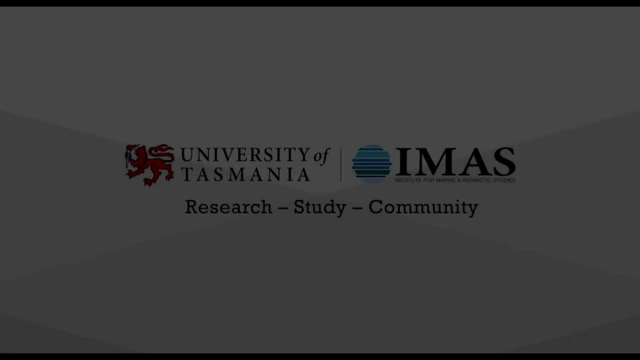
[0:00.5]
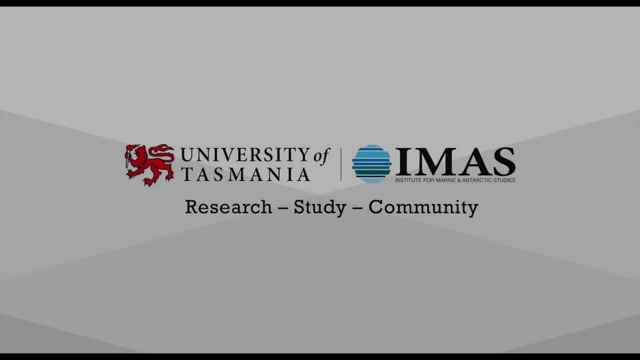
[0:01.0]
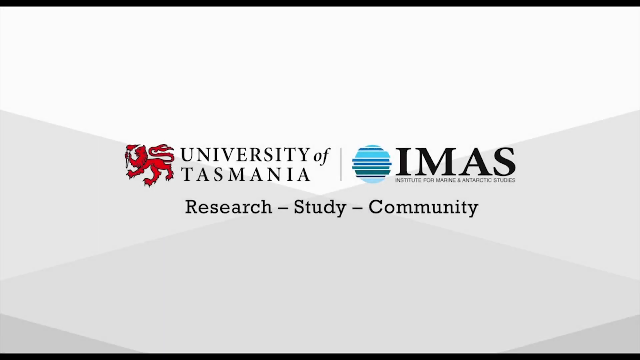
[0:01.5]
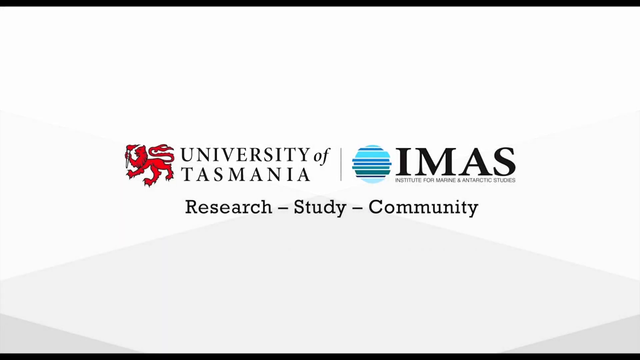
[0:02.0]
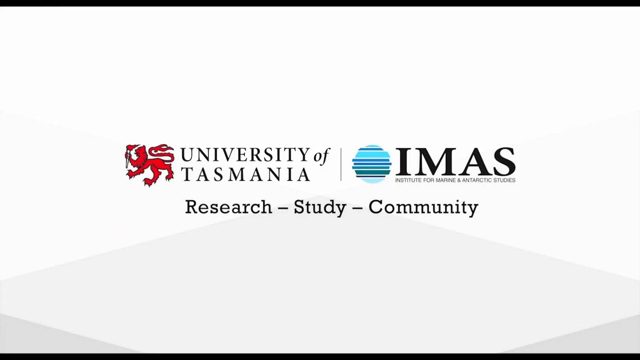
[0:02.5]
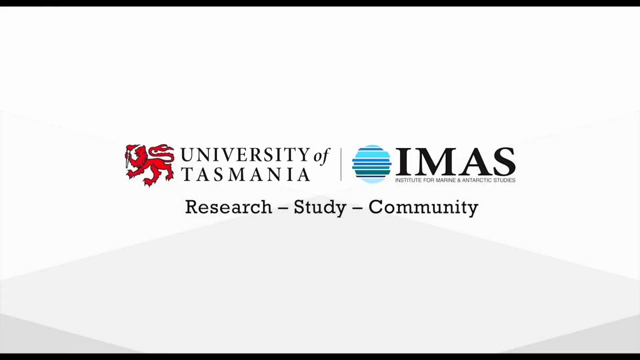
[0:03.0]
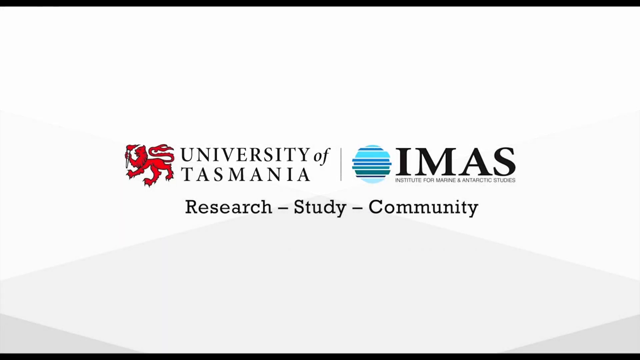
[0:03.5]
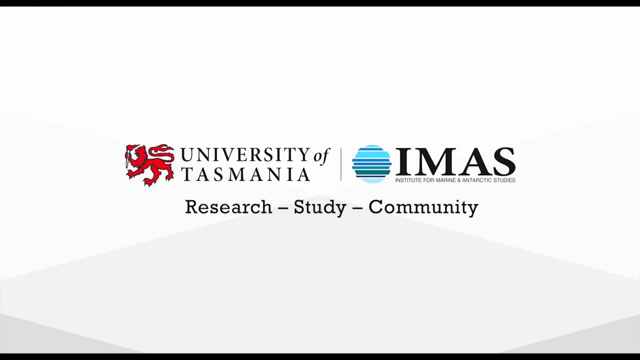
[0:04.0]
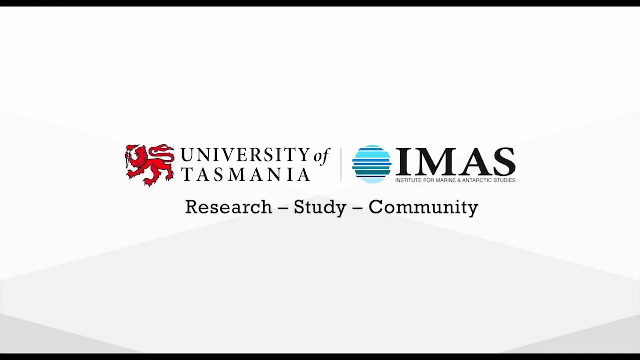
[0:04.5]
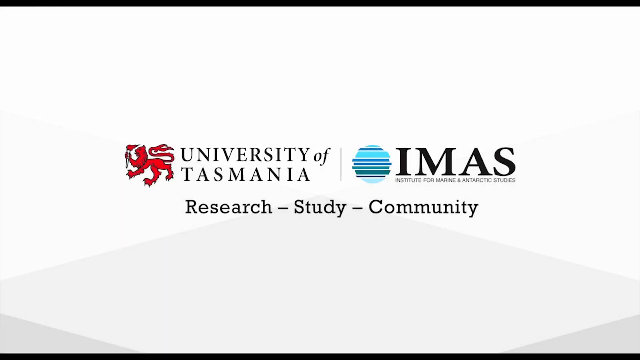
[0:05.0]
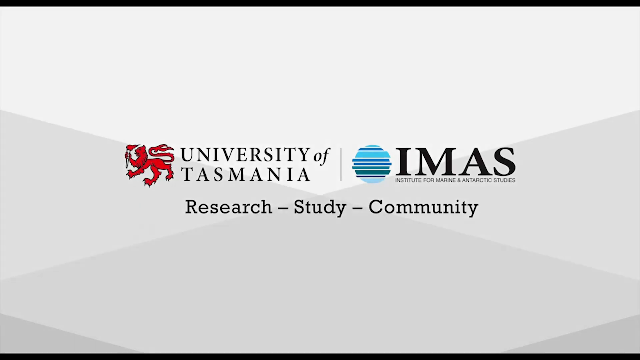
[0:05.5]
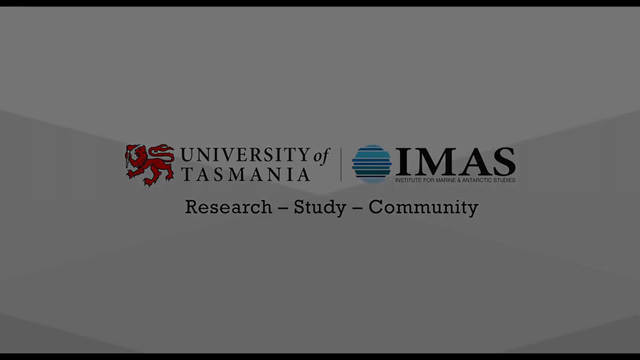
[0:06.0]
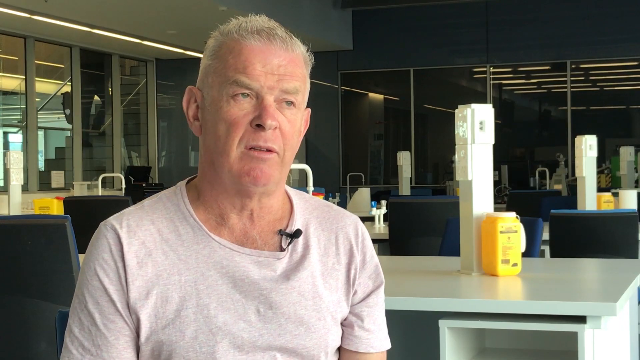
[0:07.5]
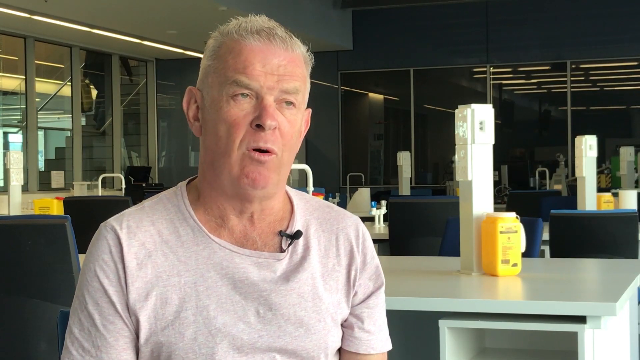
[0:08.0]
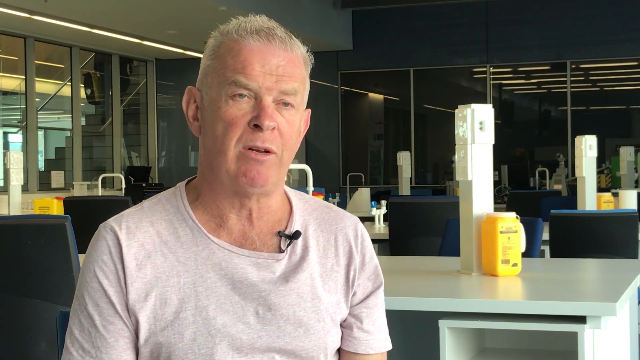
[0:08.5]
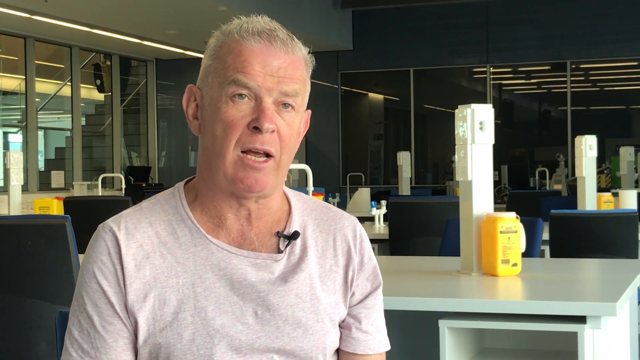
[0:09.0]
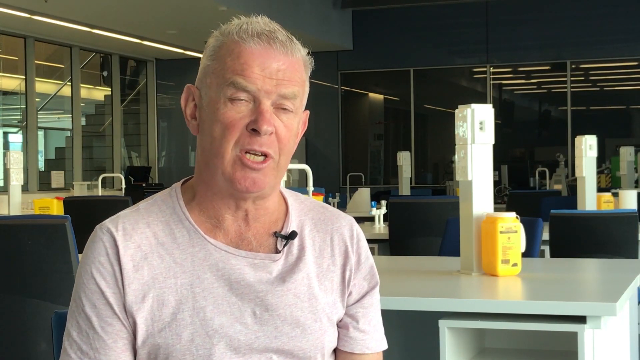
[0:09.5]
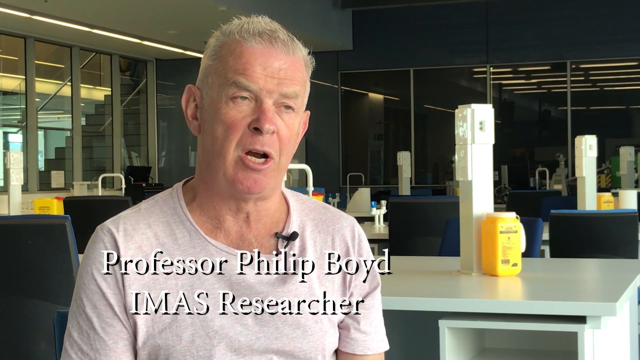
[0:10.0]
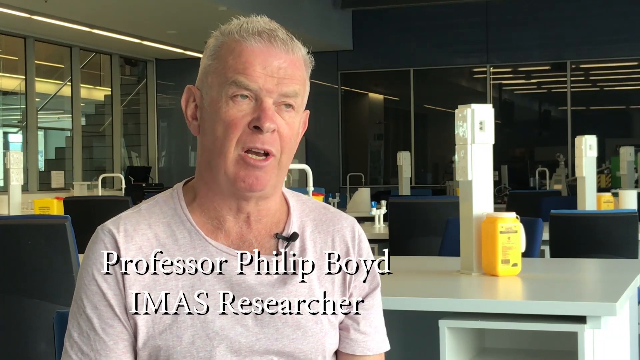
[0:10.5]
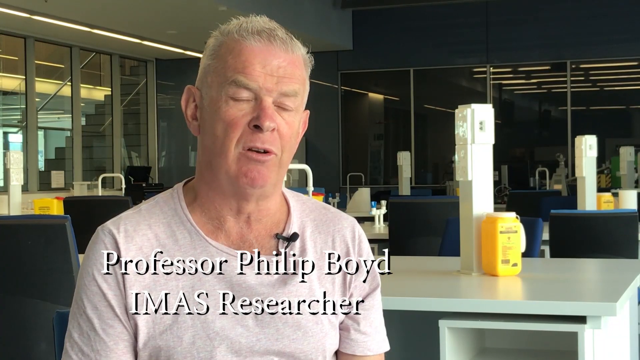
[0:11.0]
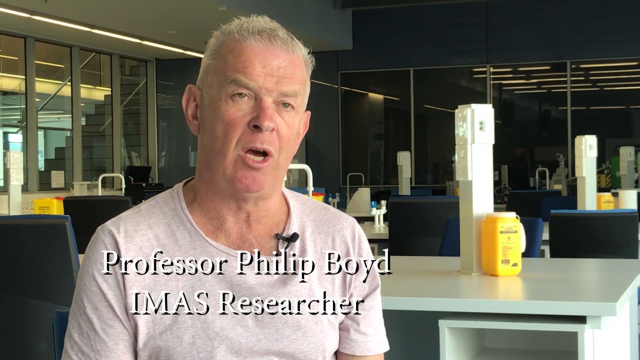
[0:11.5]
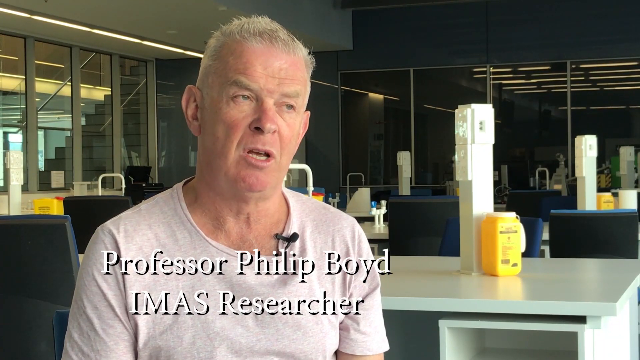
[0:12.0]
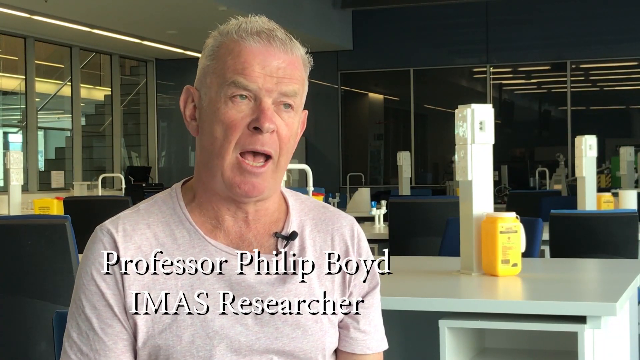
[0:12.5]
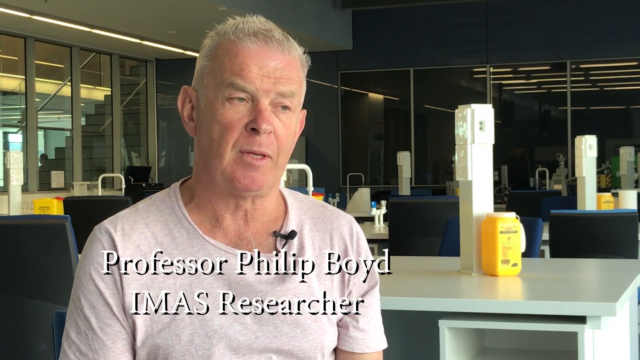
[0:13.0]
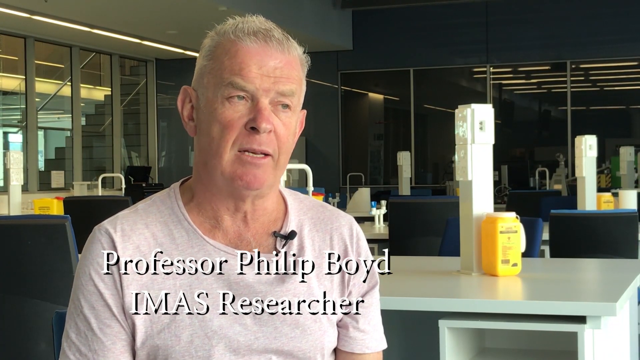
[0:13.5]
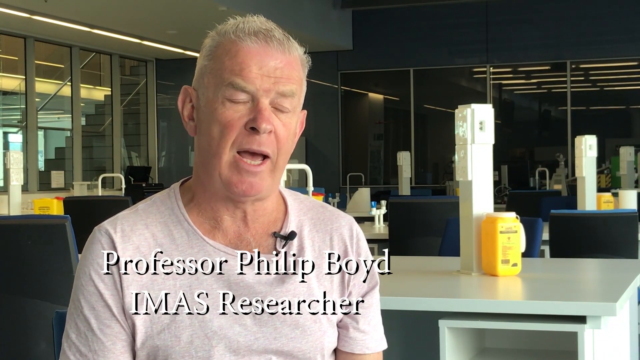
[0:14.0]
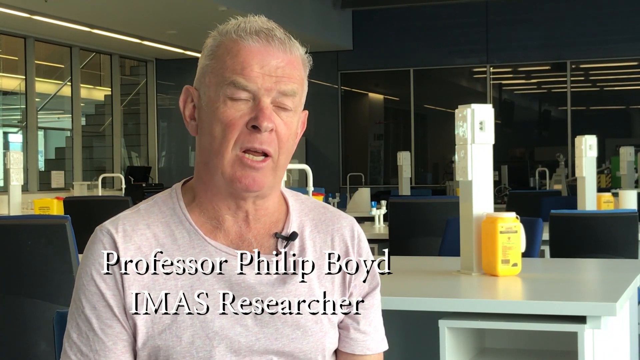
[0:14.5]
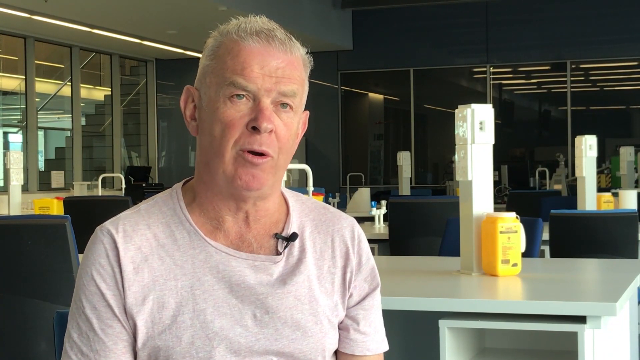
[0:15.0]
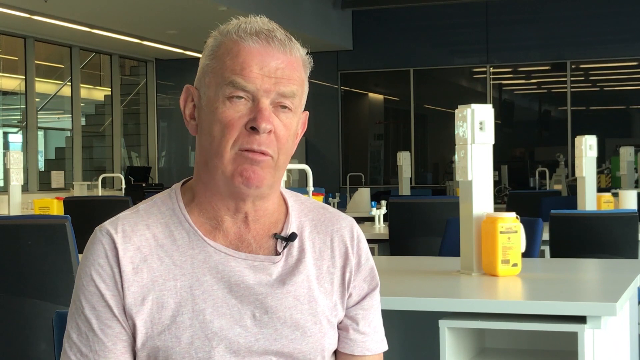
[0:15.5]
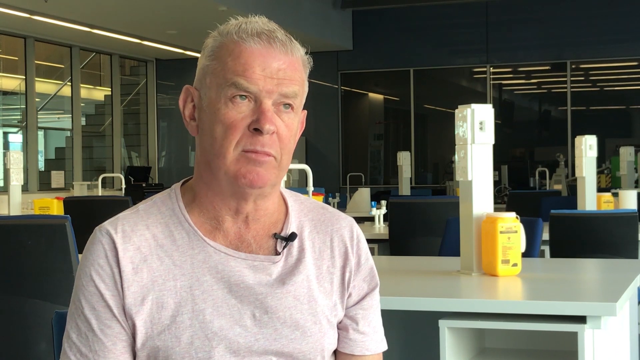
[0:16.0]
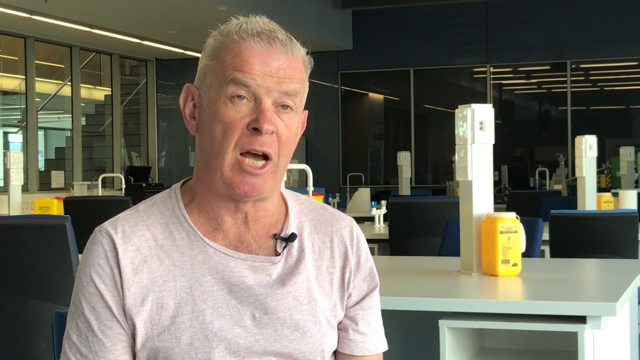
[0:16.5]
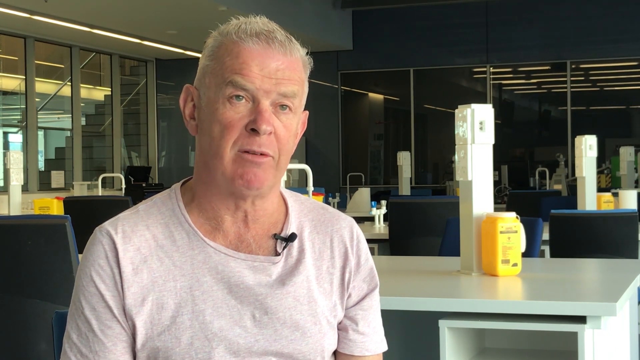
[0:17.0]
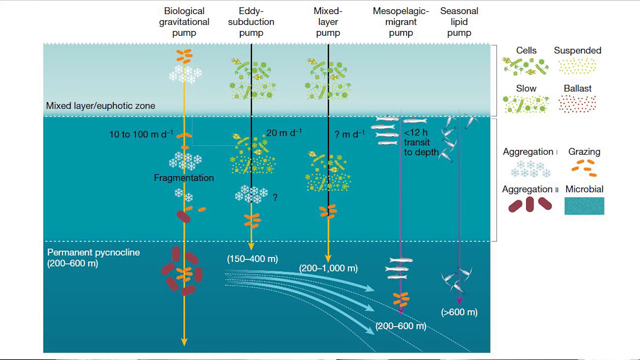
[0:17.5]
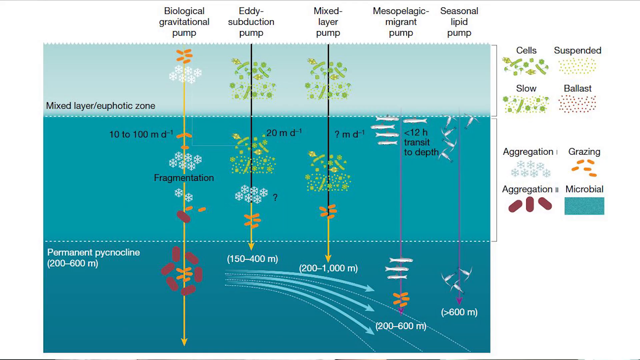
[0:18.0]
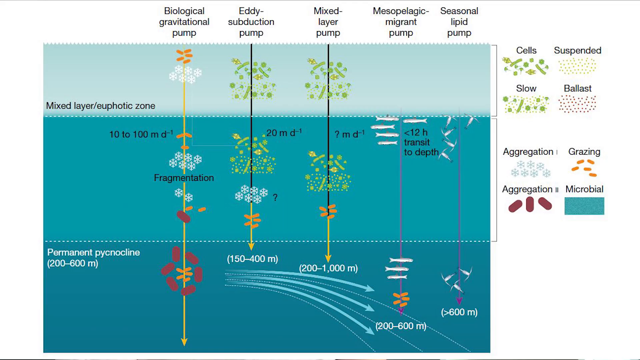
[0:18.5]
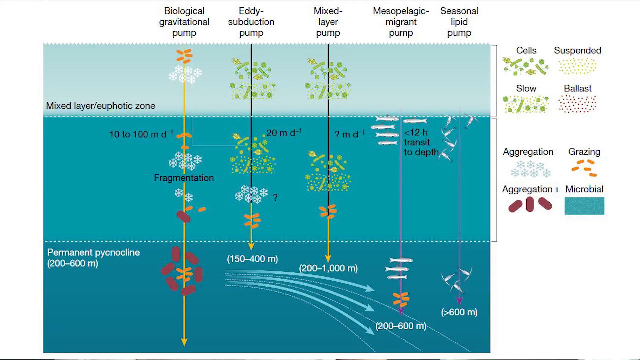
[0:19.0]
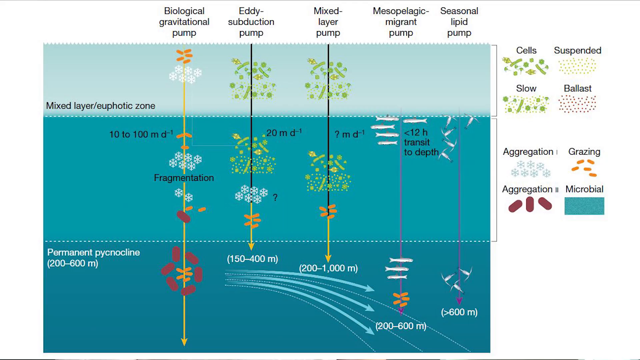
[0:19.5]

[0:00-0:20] Multiple lines of text read "University of Tasmania, IMAS, Institute for Marine and Antarctic Studies, Research Study Community." The card fades to black, and the video switches to an interview with an older man, visible from his chest upwards. His arms are by his side and he appears to be seated. On the collar of his crewneck-style t-shirt is a lapel microphone pointed towards the top right of the camera. Behind him is a lab room with multiple tables and yellow hazardous material disposal boxes. He talks towards the camera. A label appears reading "Professor Philip Boyd, I.M.A.S. Researcher." The label disappears and the man continues talking in the lab. The video then cuts to a graphic showing three blue sections in a rectangle: dark blue at the bottom, a sort of medium blue in the middle, and a lighter blue at the very top. Multiple labels along the top of the chart read "biological gravitational pump, eddy subduction pump, mixed layer pump, mesopelagic micro pump, and seasonal lipid pump."